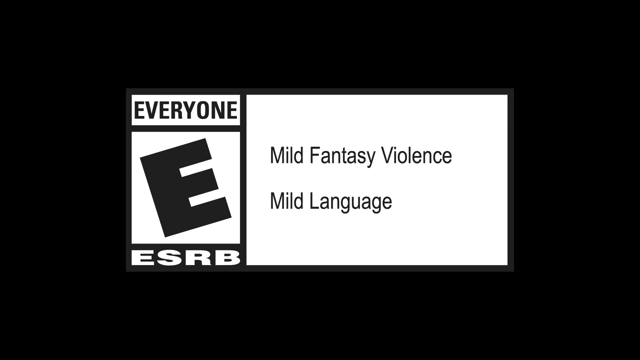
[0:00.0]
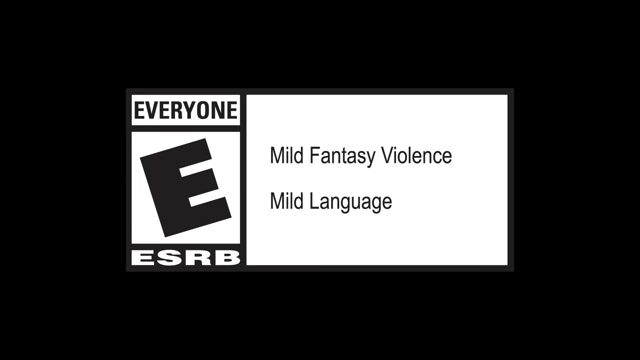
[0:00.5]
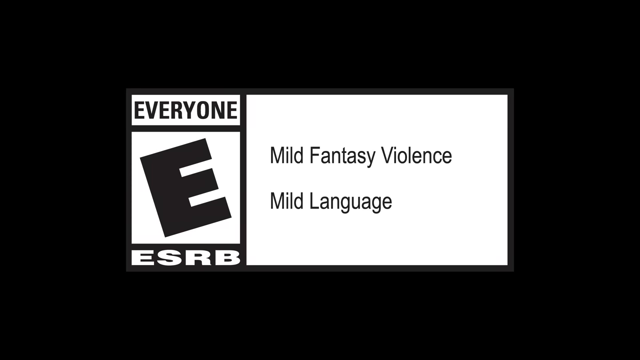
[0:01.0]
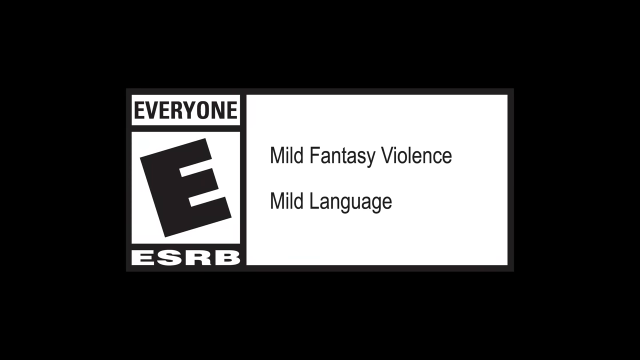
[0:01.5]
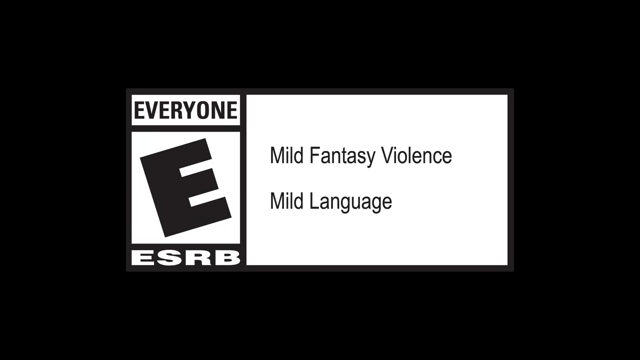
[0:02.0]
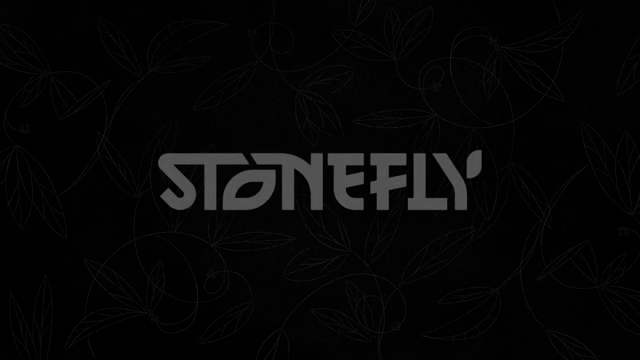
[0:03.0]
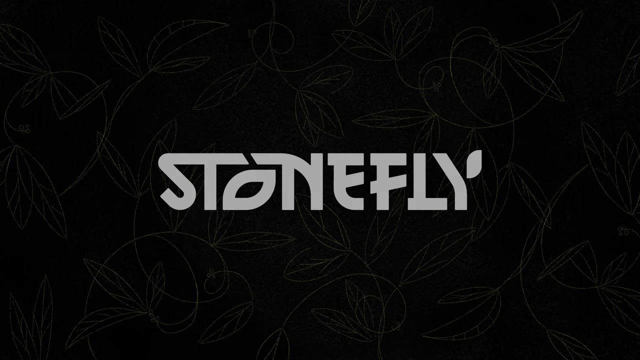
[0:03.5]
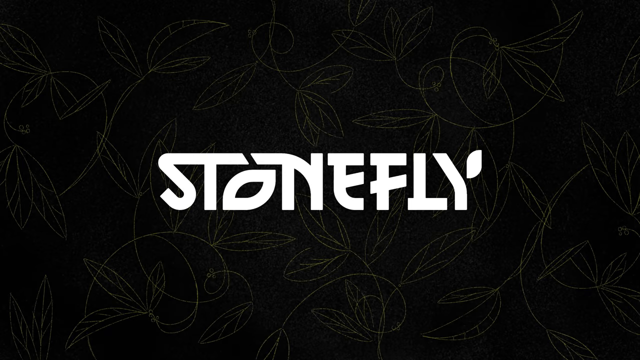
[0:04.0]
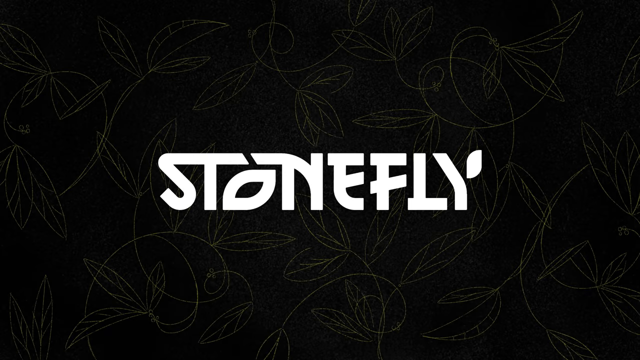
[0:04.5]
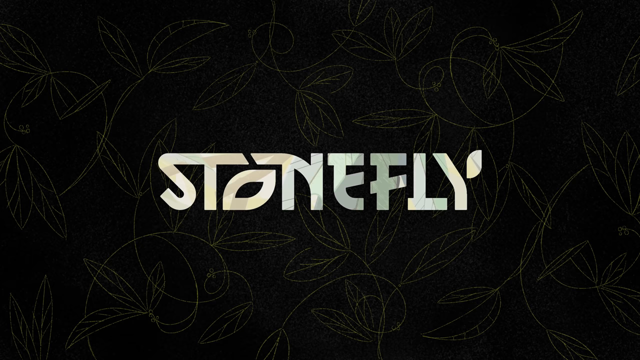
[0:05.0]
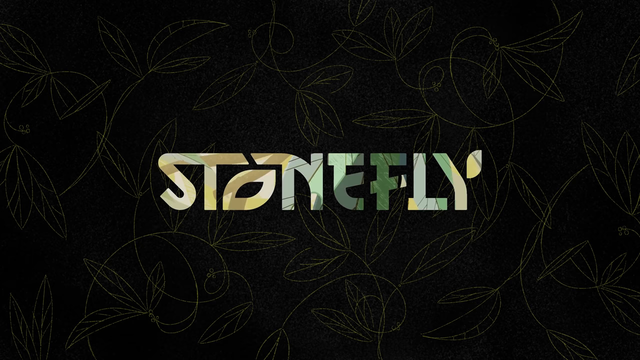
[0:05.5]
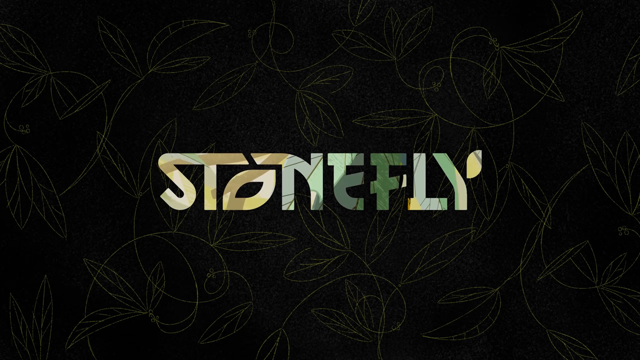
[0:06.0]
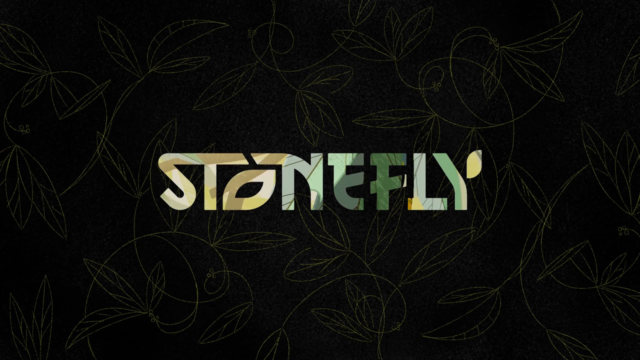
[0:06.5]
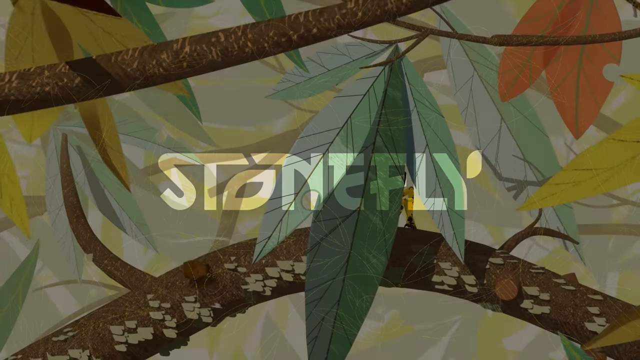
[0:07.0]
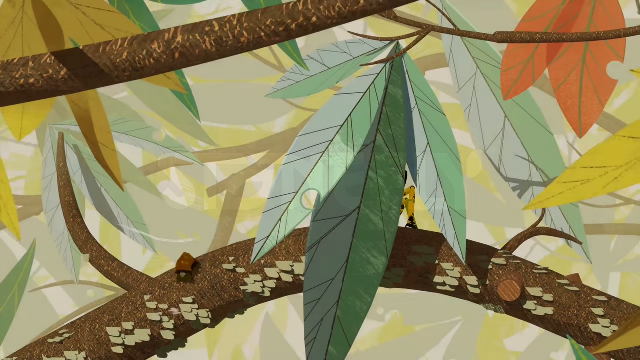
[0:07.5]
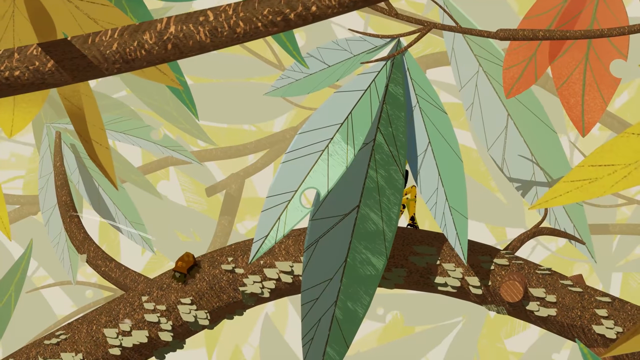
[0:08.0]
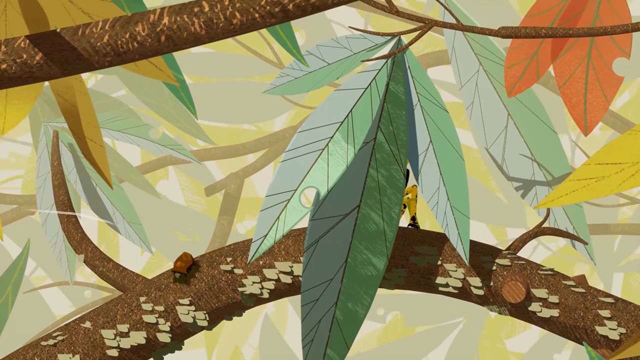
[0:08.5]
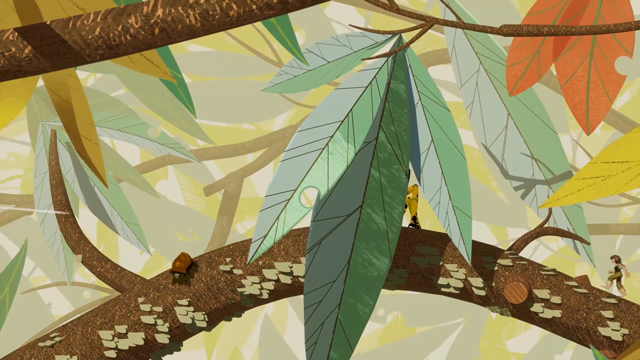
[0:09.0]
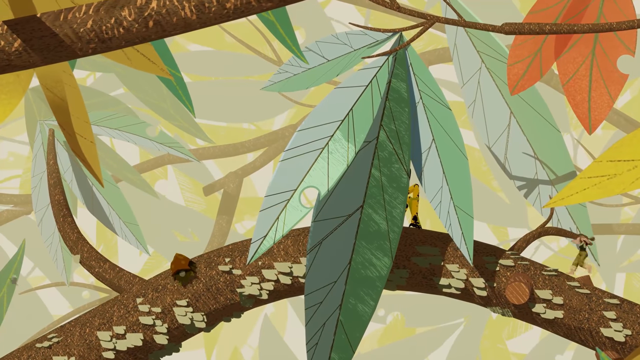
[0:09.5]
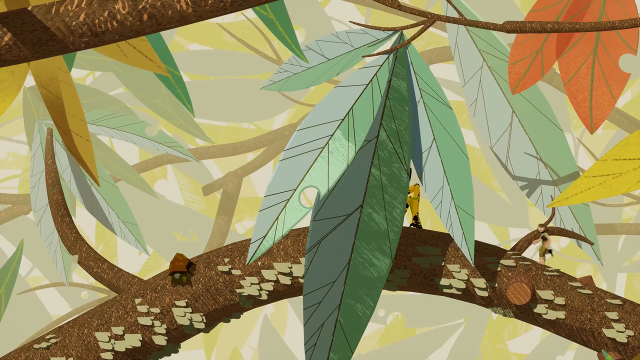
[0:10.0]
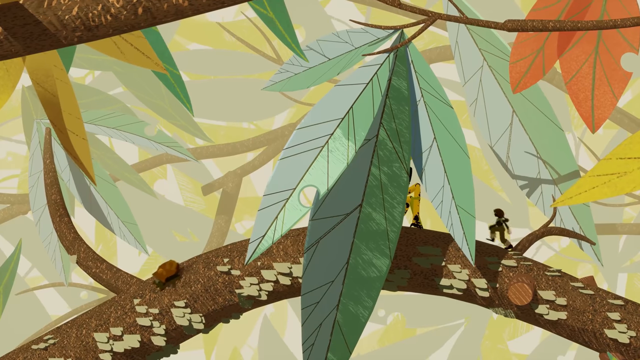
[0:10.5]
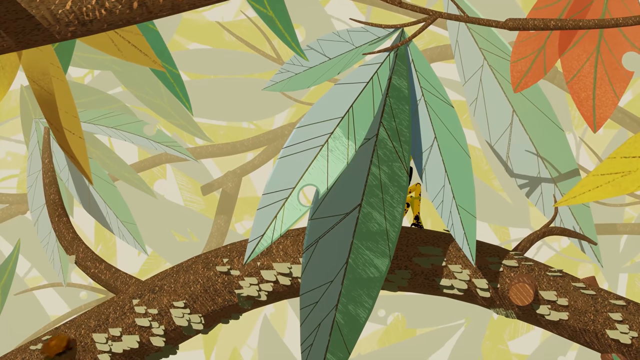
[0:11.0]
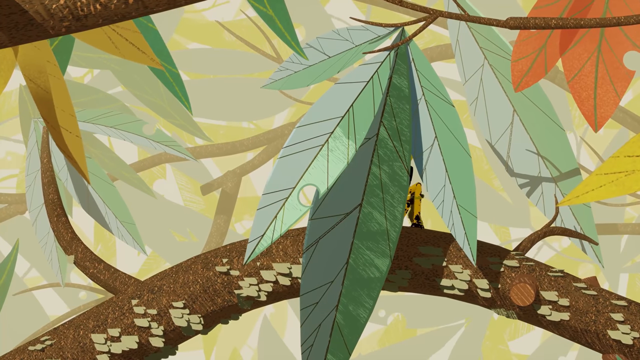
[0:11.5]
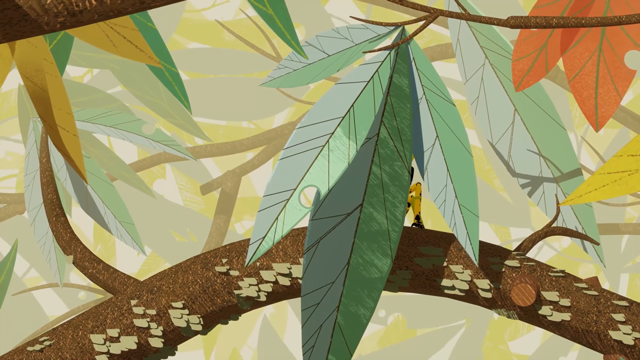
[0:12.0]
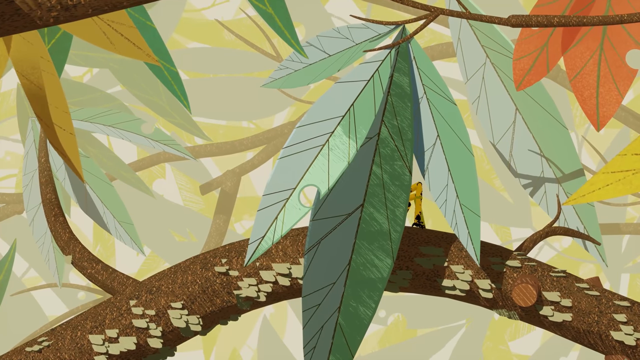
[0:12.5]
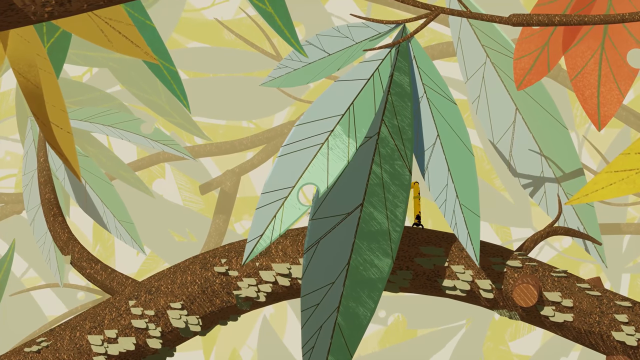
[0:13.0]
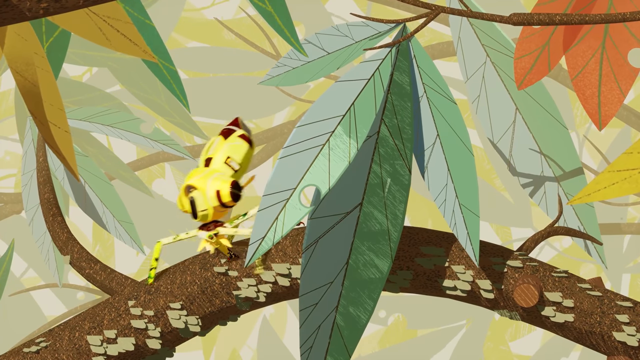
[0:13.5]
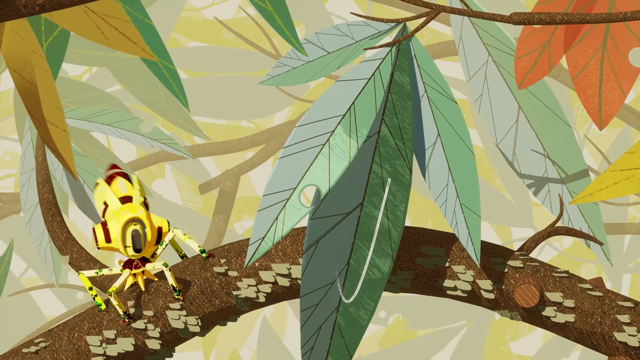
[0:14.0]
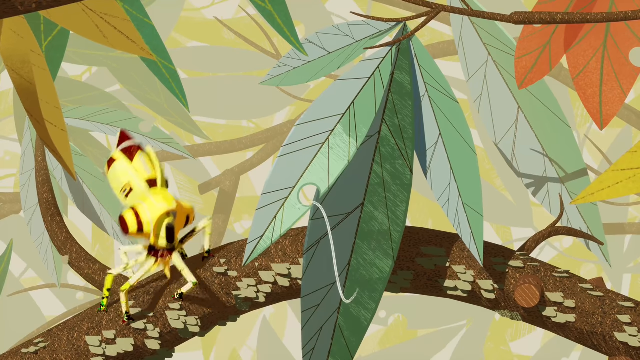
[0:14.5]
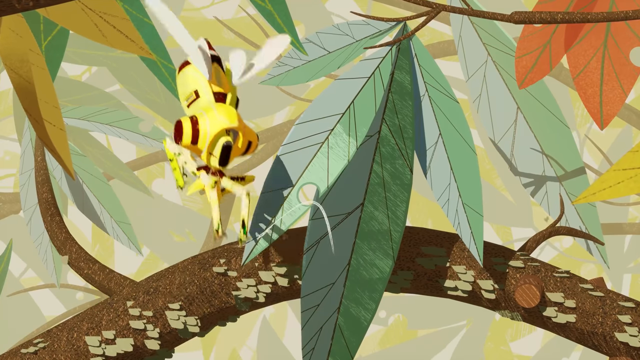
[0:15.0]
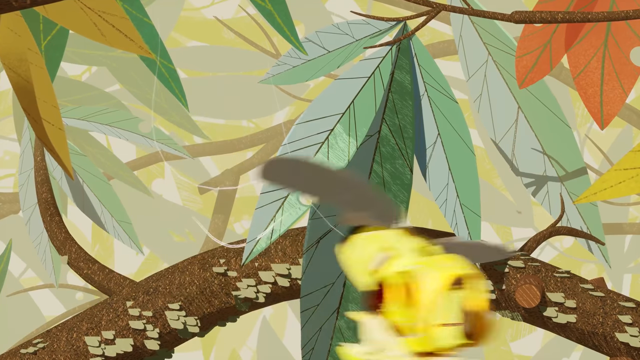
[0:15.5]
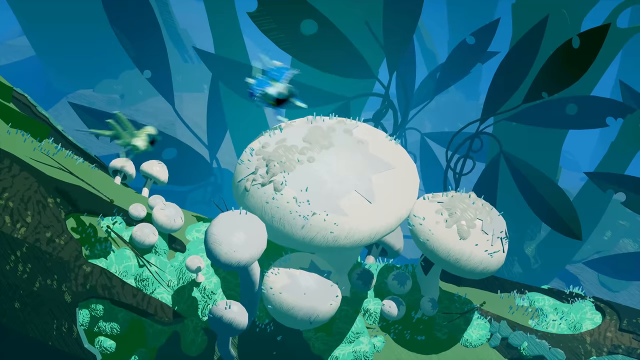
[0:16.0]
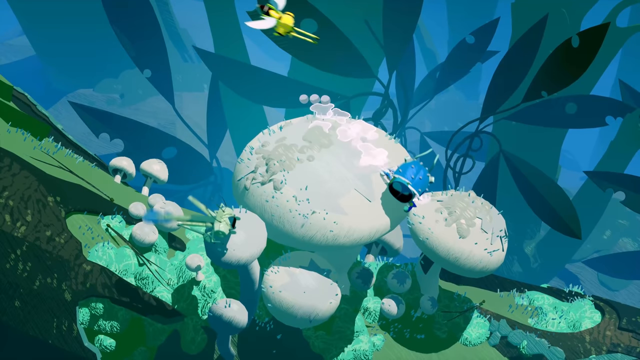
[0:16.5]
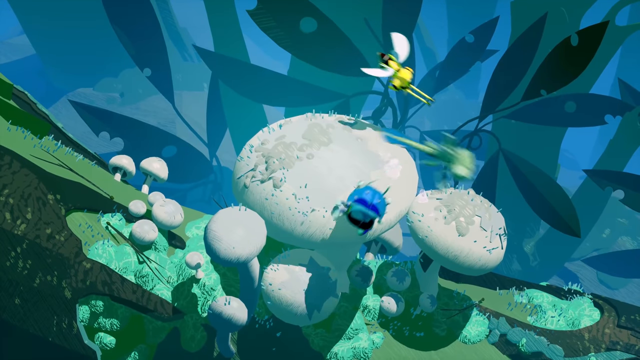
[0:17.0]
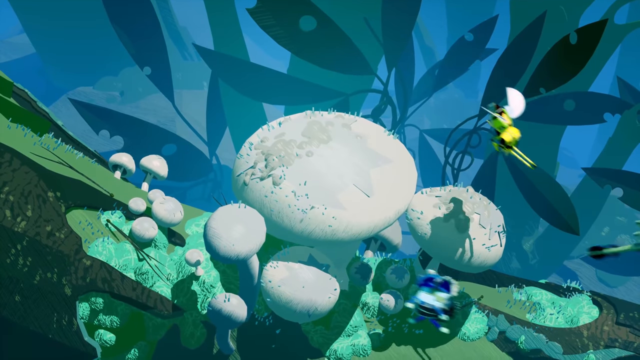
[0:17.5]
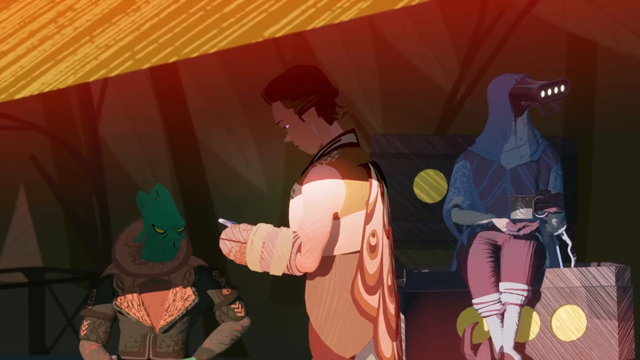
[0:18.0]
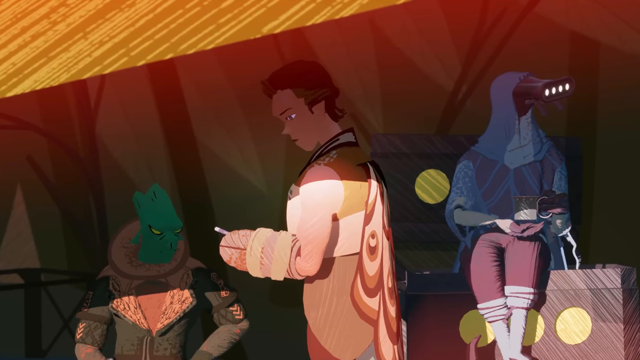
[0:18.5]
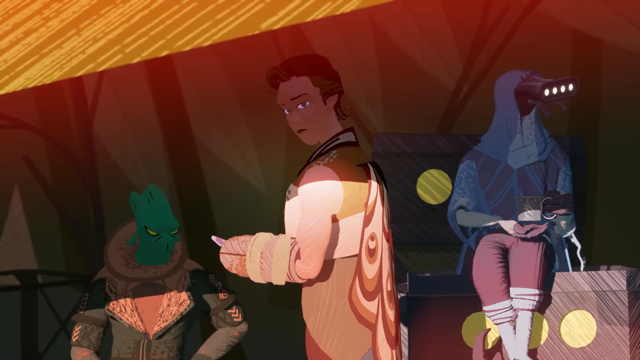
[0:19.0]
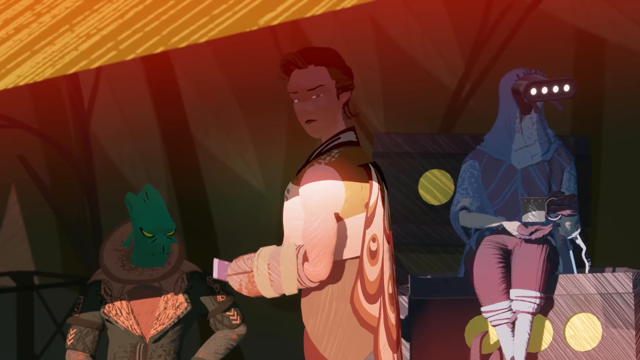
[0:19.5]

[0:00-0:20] The video appears to be about a video game, possibly a trailer for one, and the footage seems to be a non-interactive cutscene. An animated close-up shows the branches of a tree, with leaves and some insects. A small woman walks along a branch, seems to get into a vehicle that looks like some sort of insect, and then starts flying around. Next, some strange-looking people are in a tent; they seem to be a combination of humans and aliens.